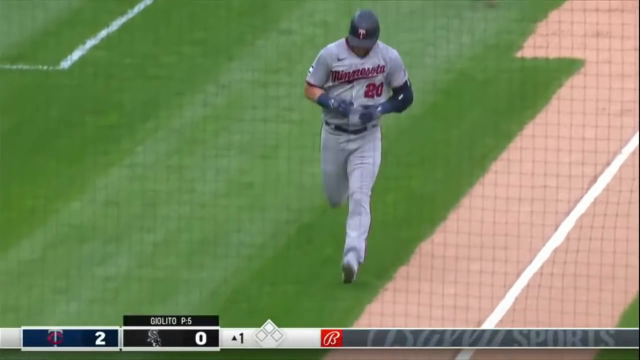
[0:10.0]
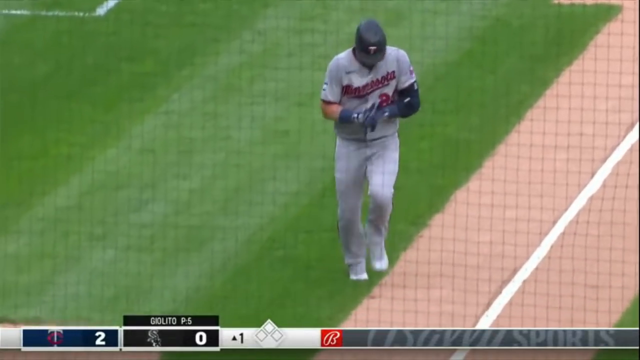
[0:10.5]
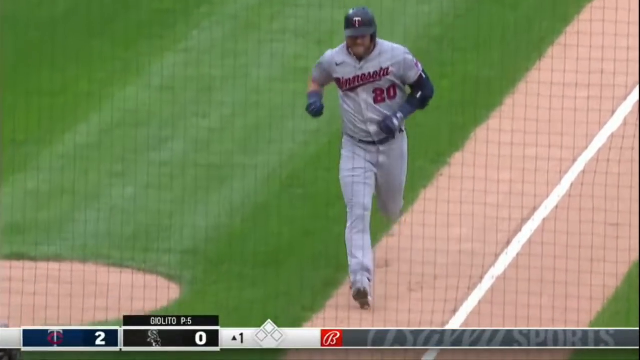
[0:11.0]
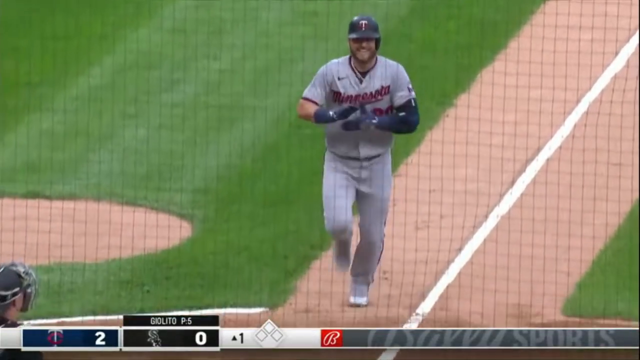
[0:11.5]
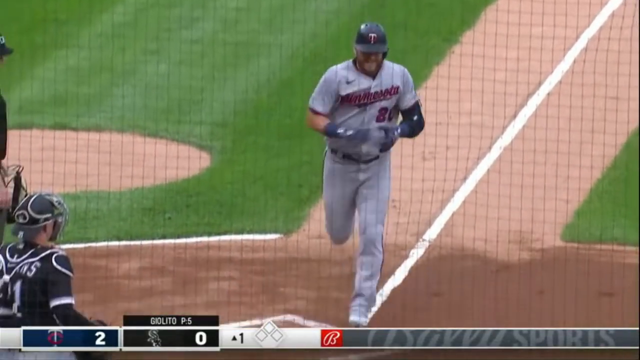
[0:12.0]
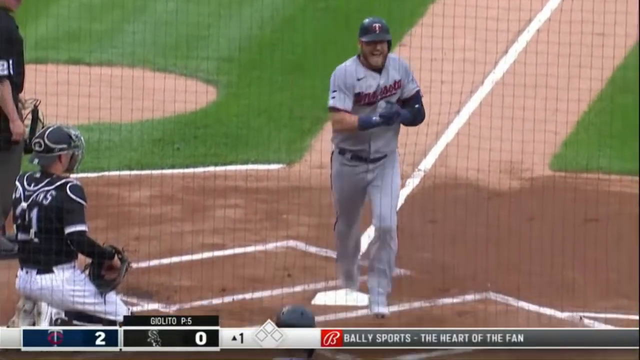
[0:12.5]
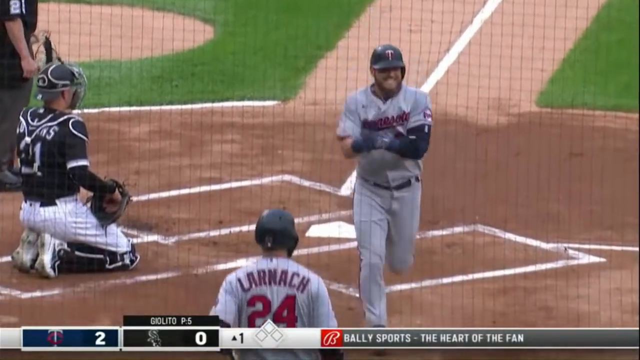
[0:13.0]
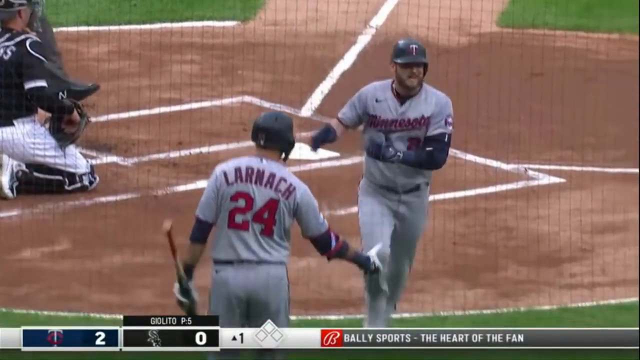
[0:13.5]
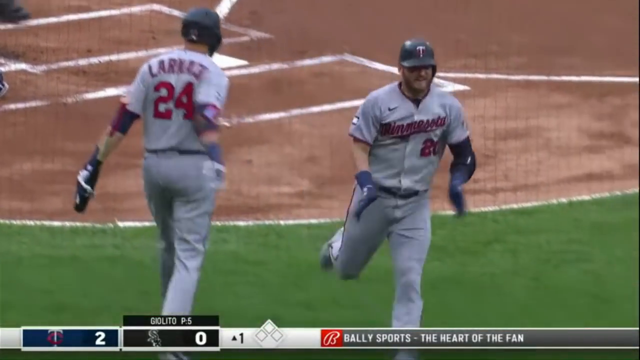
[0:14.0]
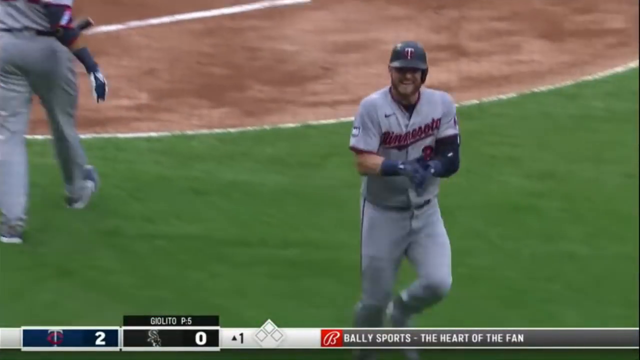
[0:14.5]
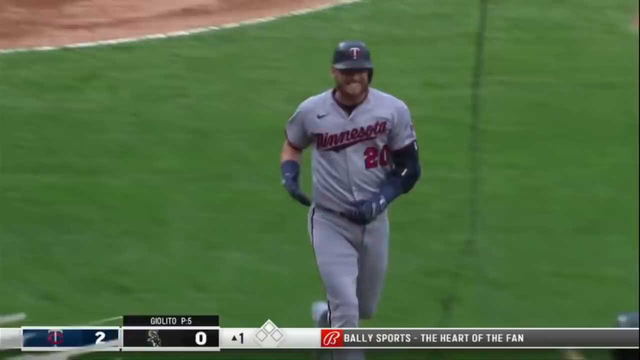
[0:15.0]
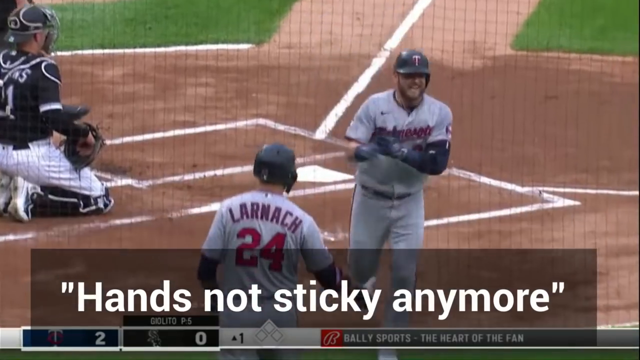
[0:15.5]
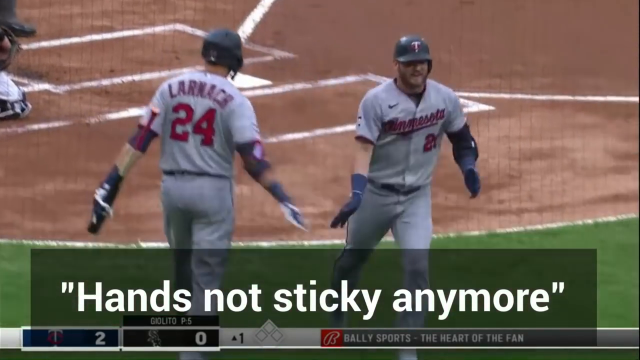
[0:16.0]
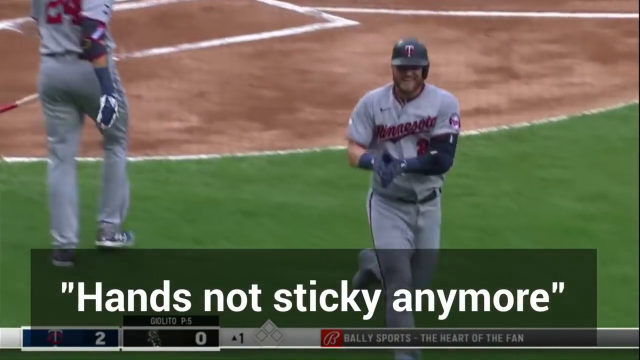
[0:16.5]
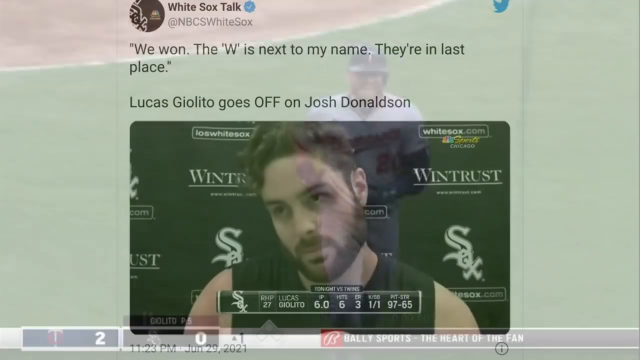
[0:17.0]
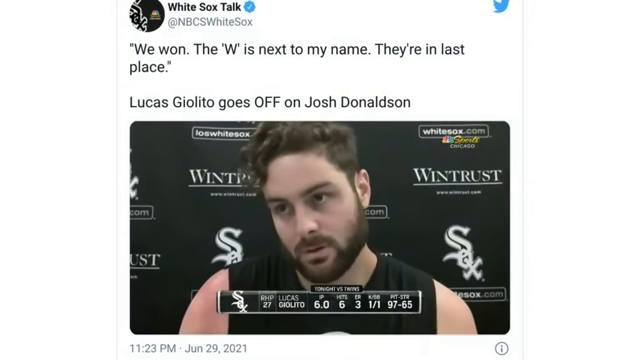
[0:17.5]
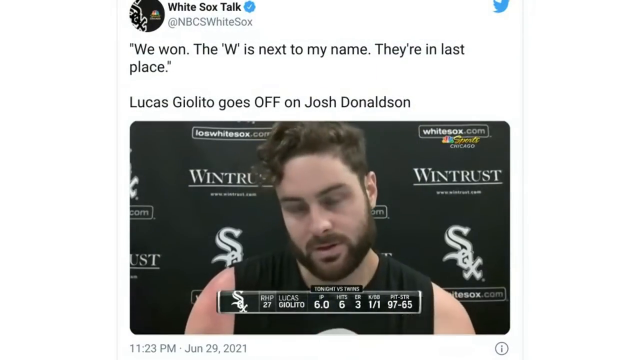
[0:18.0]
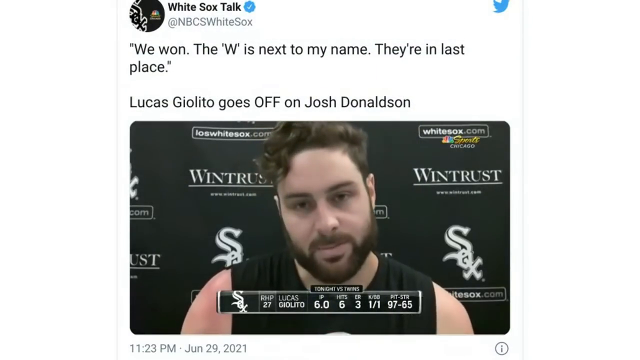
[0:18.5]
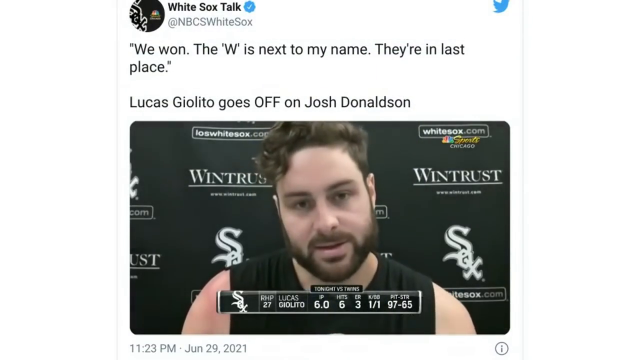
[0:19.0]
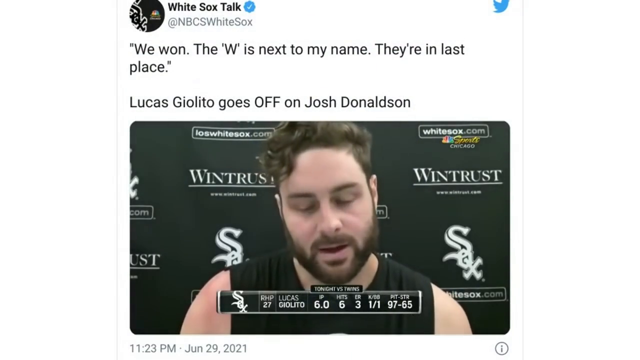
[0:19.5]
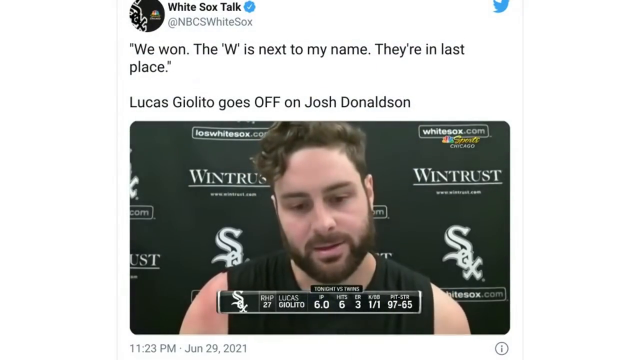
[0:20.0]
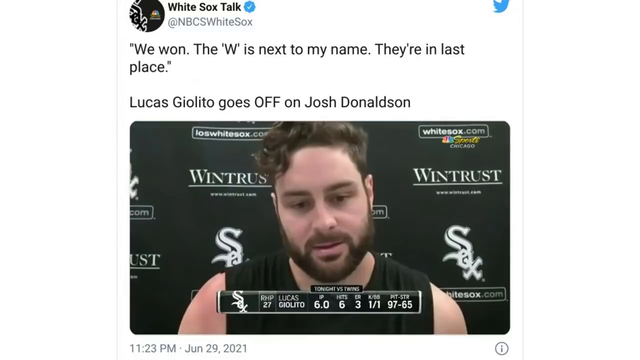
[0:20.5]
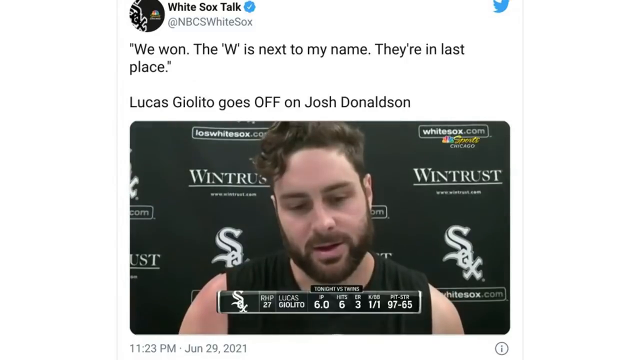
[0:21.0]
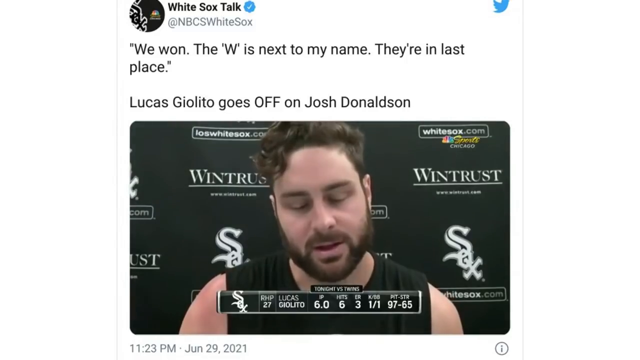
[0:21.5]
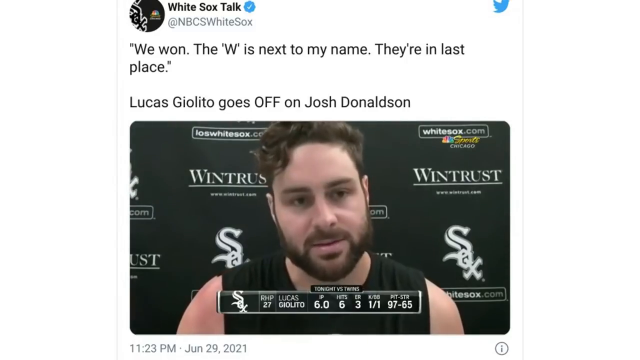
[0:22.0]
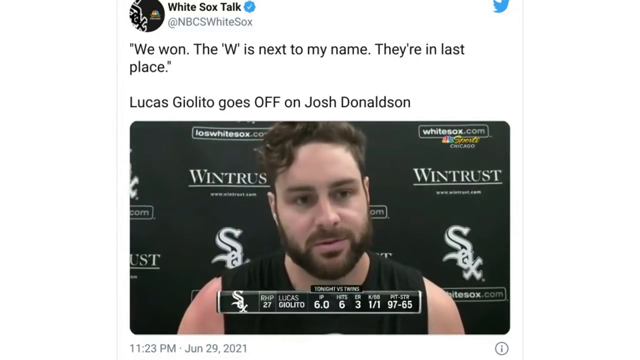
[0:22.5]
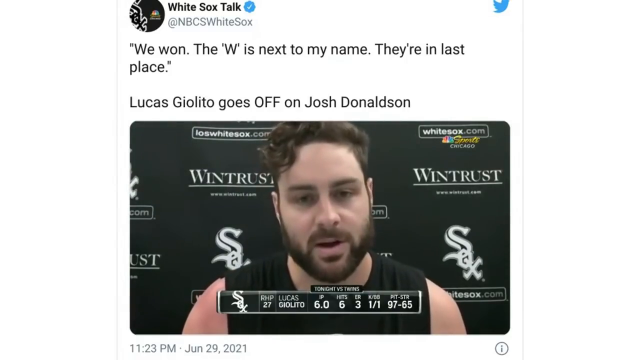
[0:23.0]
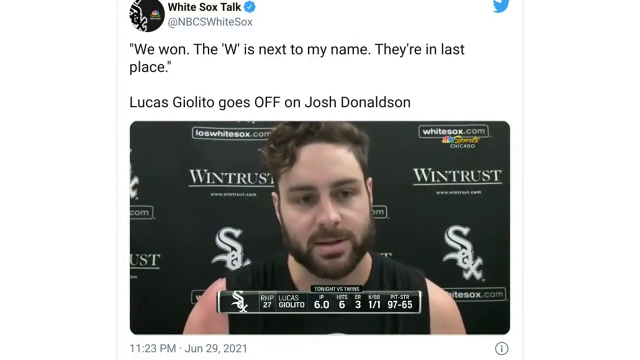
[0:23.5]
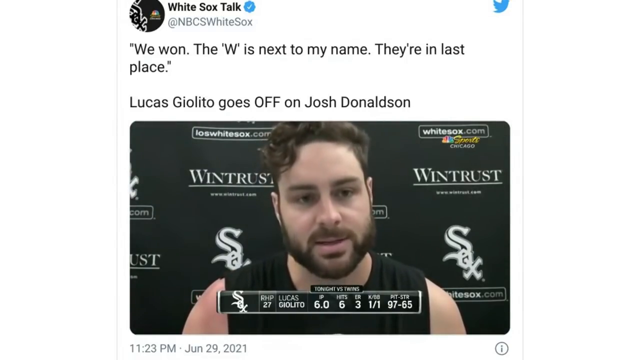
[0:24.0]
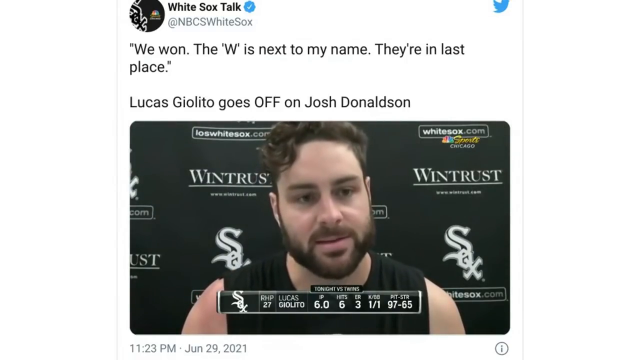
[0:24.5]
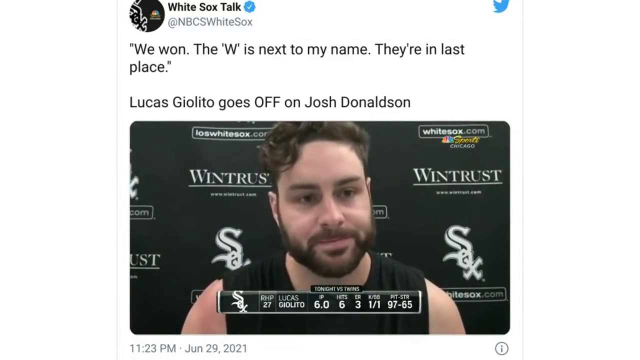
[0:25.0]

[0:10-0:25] The man in the gray t-shirt and gray pants shakes hands with another player in a gray t-shirt and gray pants with the number 24 on his t-shirt. Text at the top right of the screen reads "hand not sticky" during the handshake. State Farm is among the visible sponsors, and the score shows one side at 2 and the other at 0. A video posted on Twitter by White Sox Talk appears with the caption "we won the W is next to my name They are in last place Lucas Giolito goes off on Josh Donaldson." In it, a man with long brown hair wearing a black singlet is talking and giving feedback on a game, while another portion of the video shows players running and playing on the field.